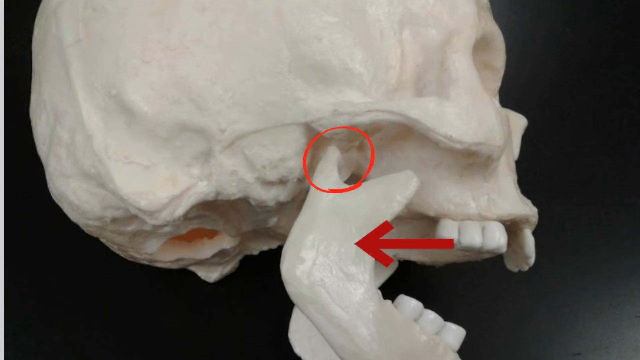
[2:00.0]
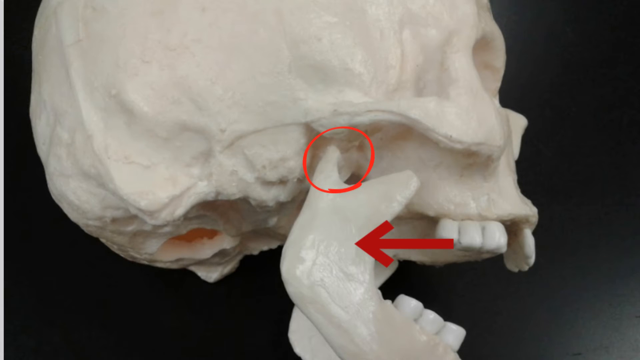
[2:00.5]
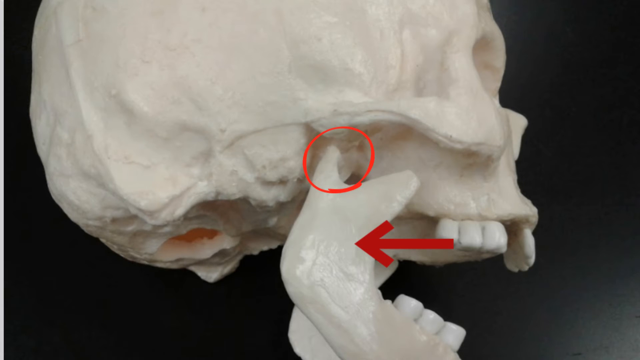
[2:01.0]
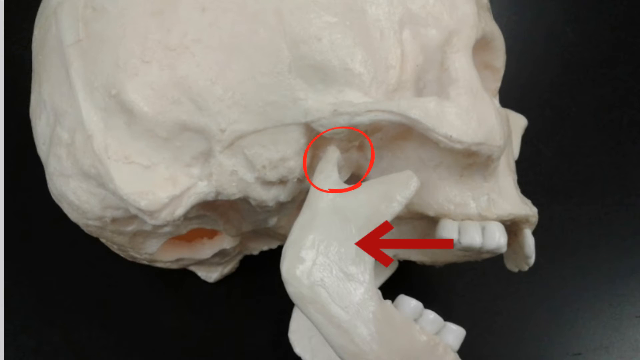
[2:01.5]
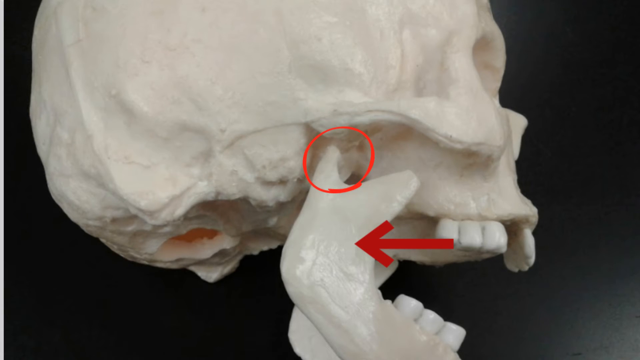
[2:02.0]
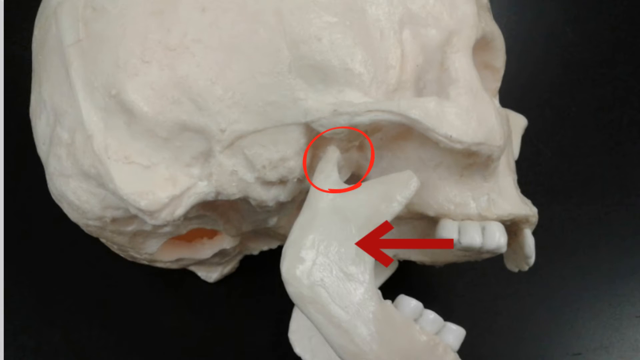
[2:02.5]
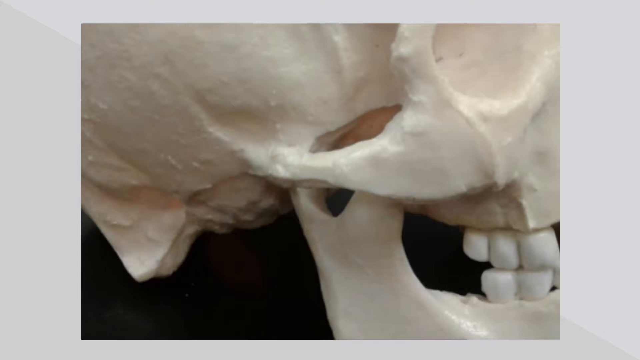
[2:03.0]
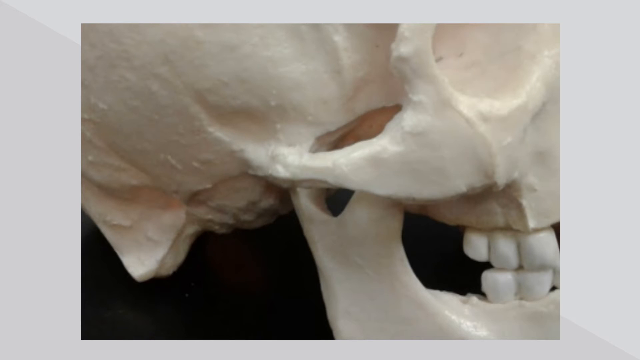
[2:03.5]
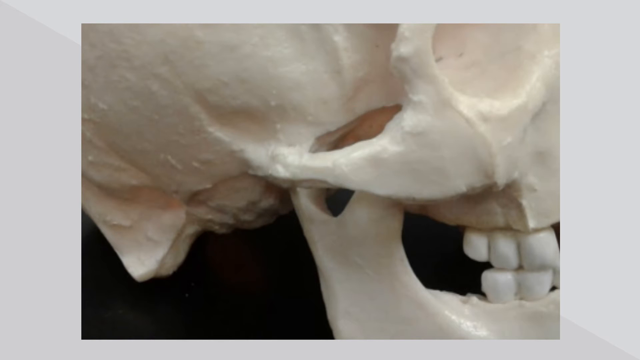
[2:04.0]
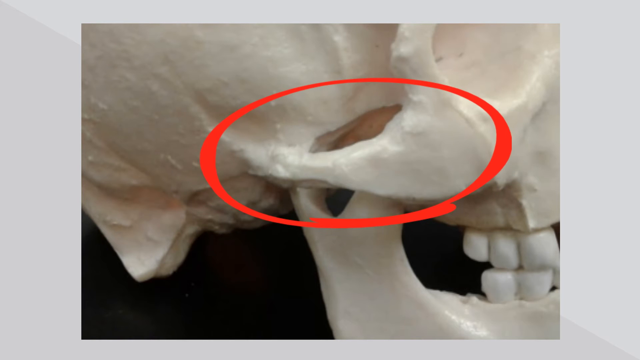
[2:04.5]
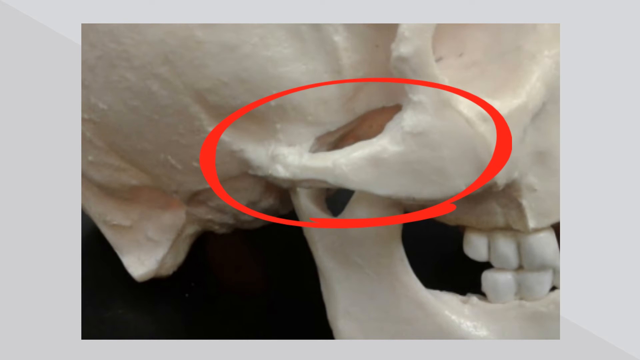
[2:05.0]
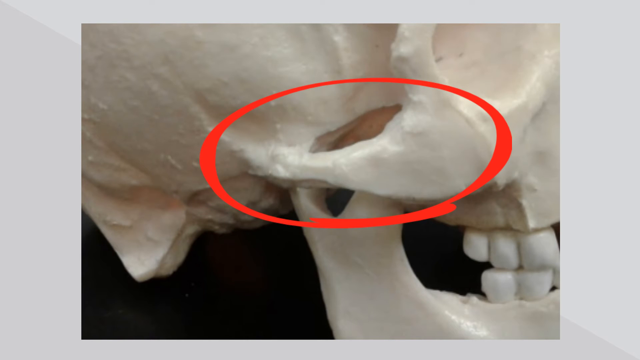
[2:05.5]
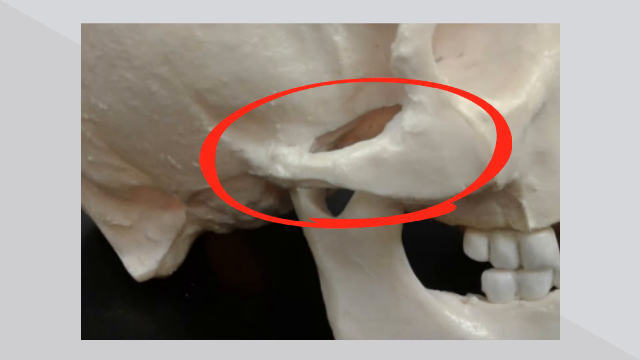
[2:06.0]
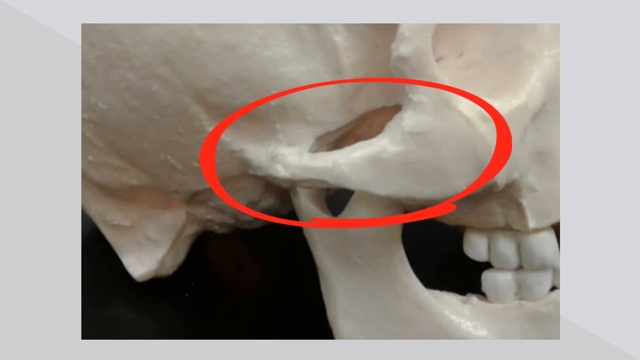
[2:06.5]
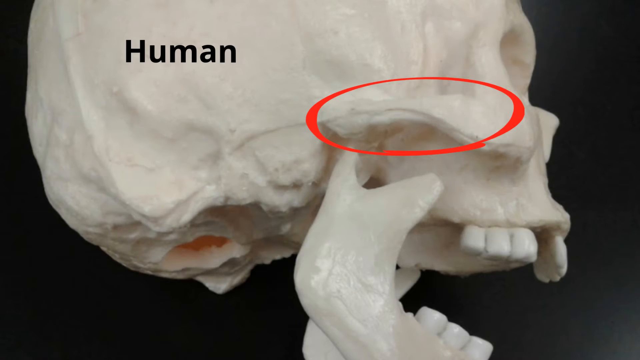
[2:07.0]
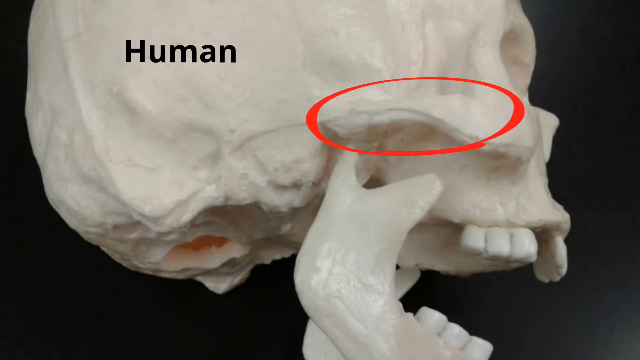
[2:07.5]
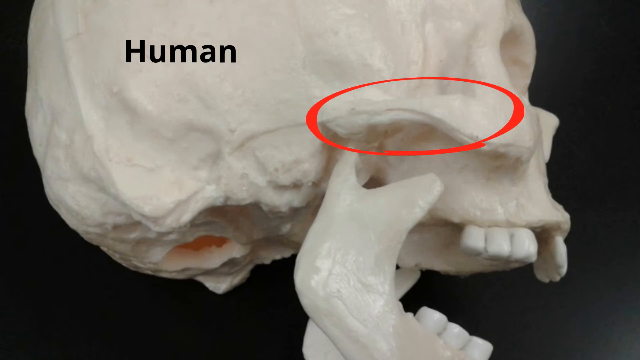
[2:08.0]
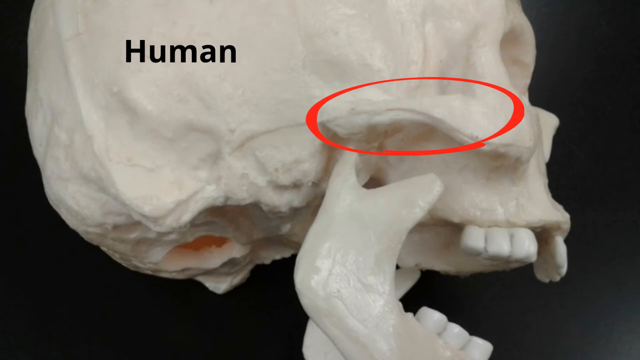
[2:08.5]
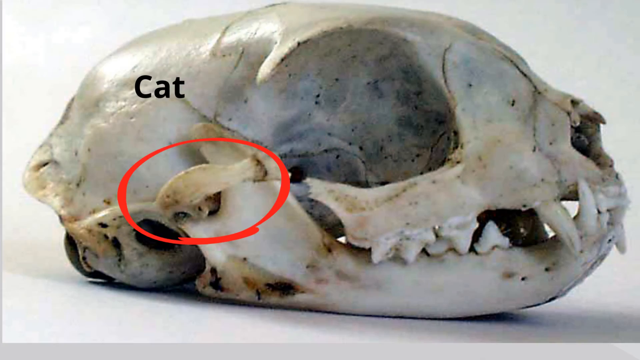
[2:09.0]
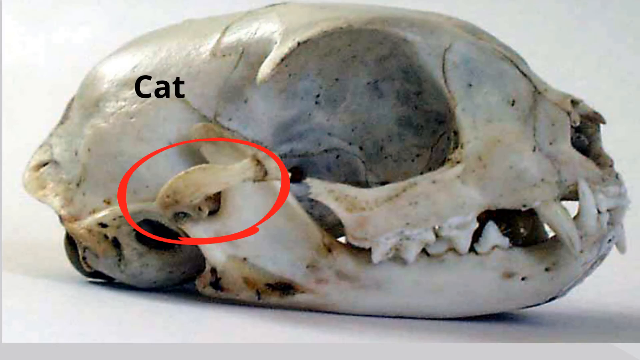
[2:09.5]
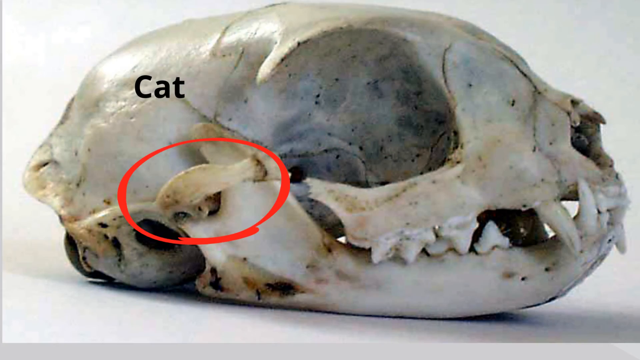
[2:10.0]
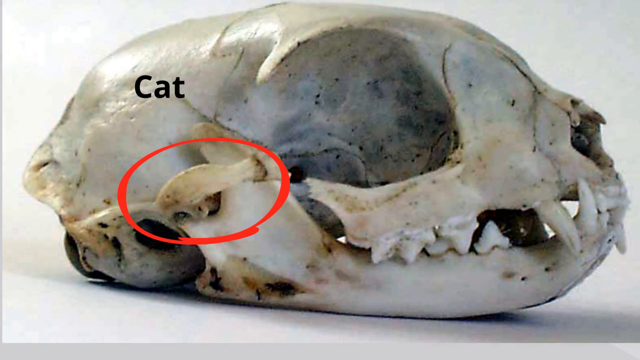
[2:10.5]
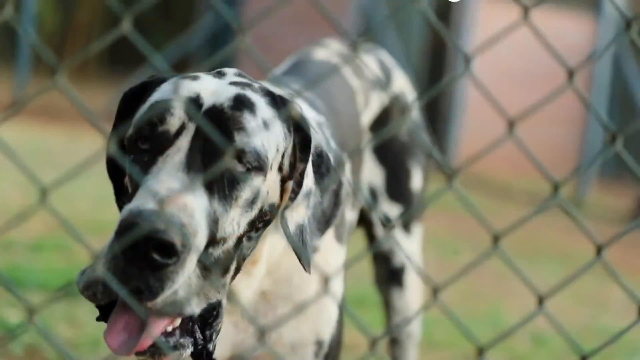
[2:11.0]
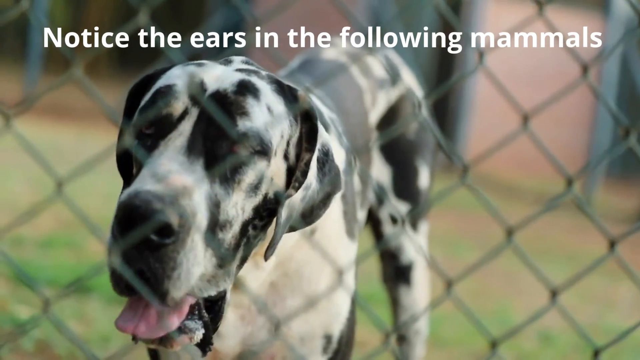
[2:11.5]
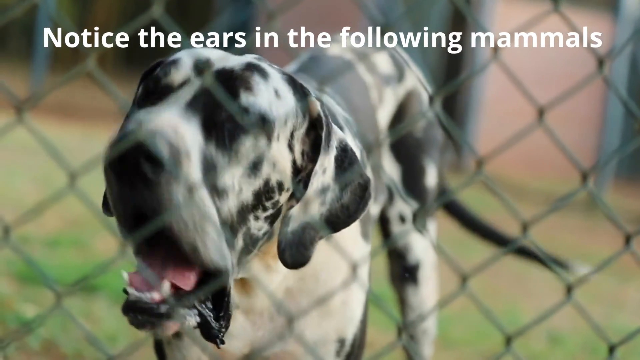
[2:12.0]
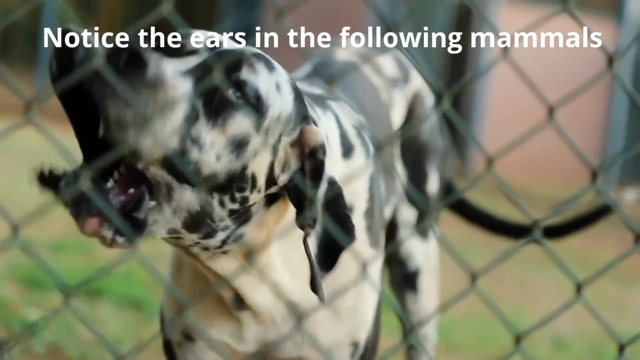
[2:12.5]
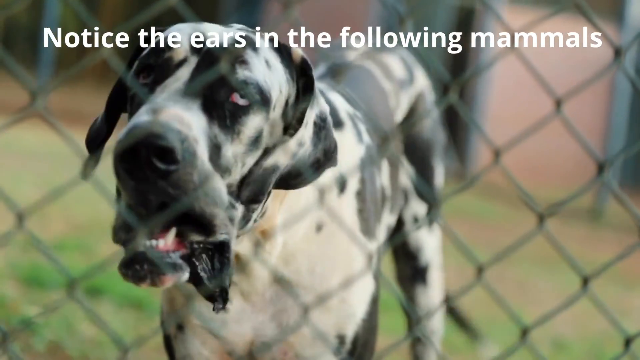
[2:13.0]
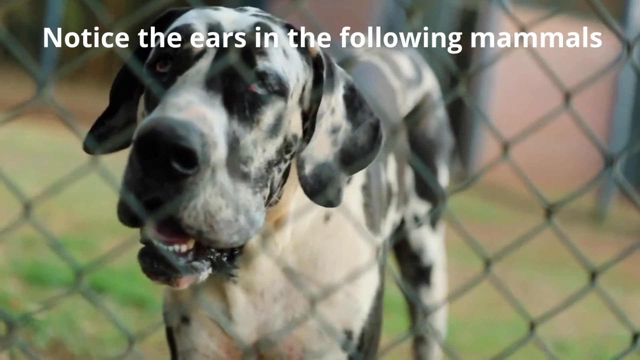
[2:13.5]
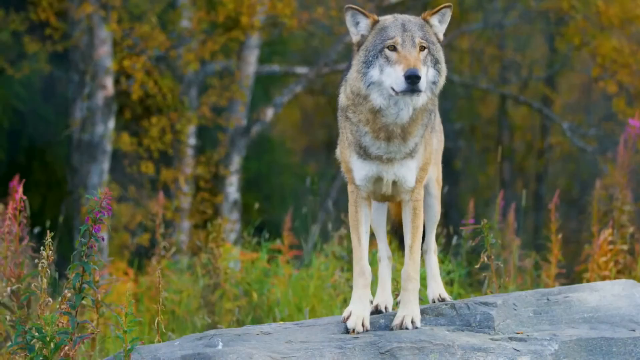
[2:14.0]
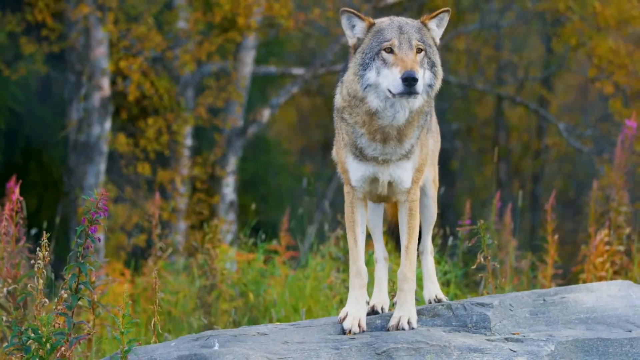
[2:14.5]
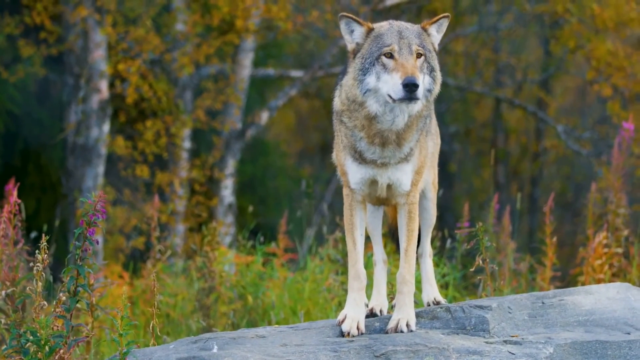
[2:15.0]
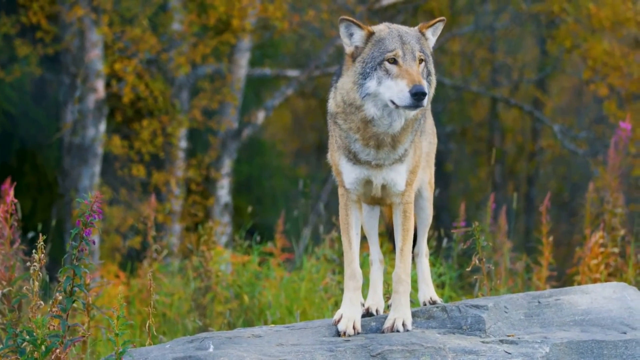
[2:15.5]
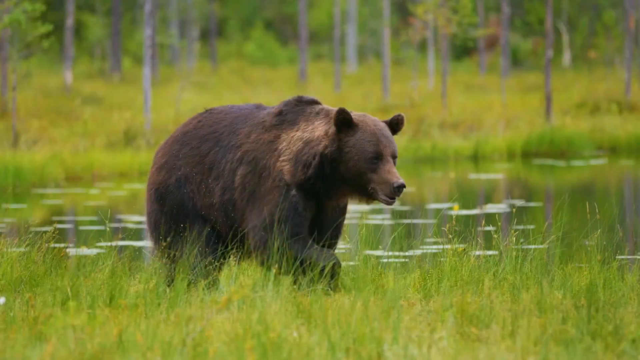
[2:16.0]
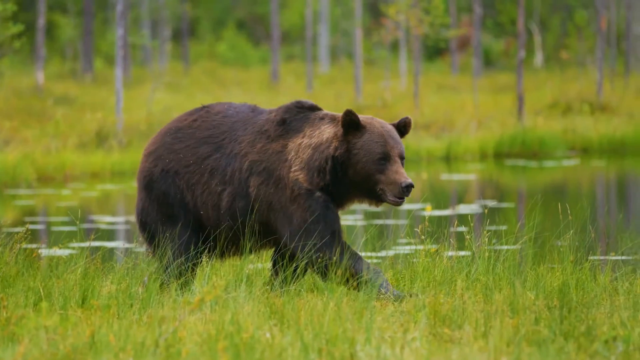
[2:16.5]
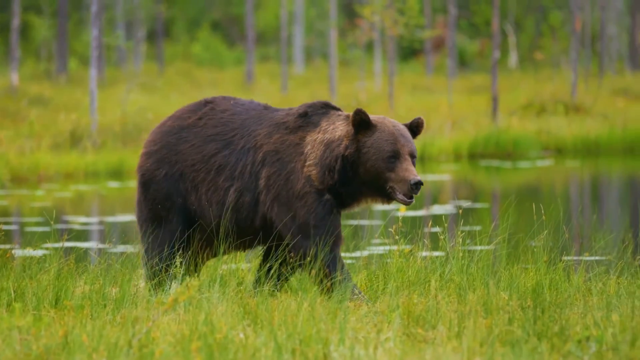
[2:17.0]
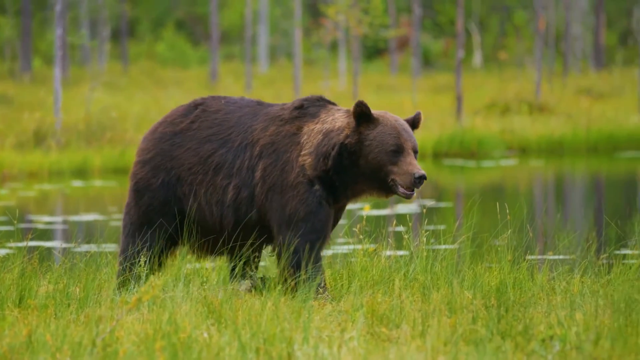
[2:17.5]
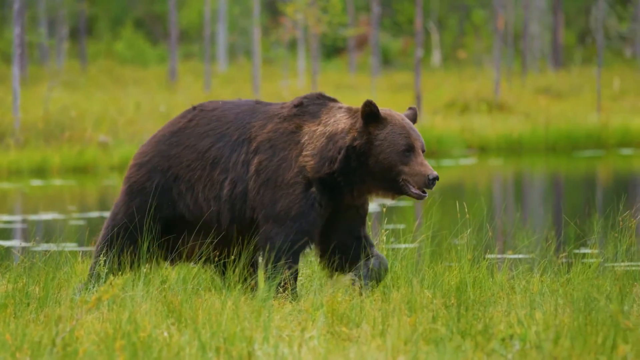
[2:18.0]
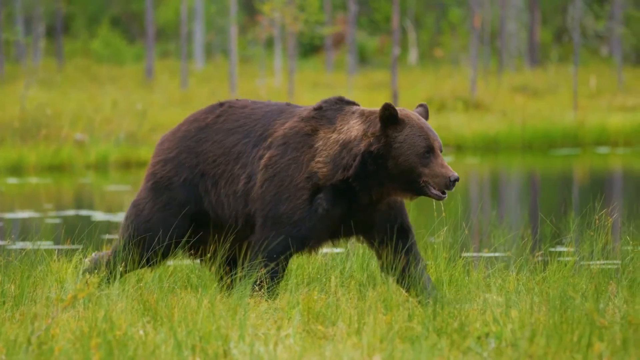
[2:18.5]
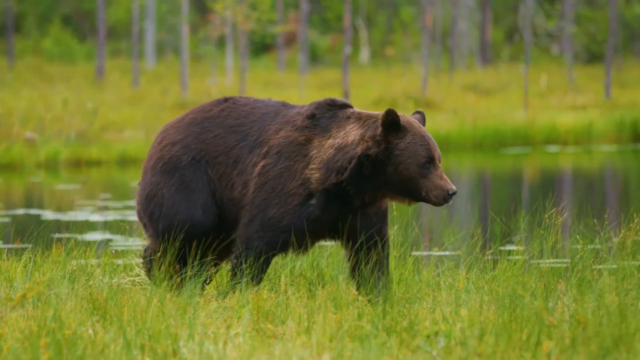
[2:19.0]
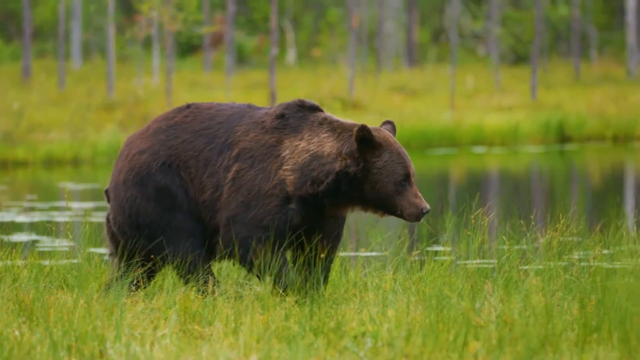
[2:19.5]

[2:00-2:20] Another human jaw is shown; the first one seems broken or dislocated from where it is supposed to be. A cat's jaw follows, as it is supposed to be; the cat's skull seems intact, and it shares some similarities with the human skull. A black and white dog with white patches appears, with a view of its ears. A brownish wolf with some gray and white stands in its natural habitat, looking at something. A bear walks along a riverbank, and a hippo is in a river.